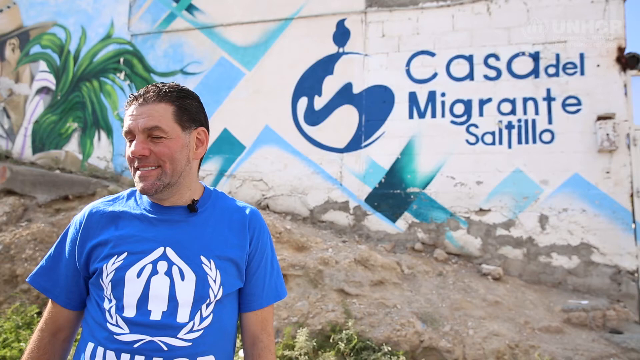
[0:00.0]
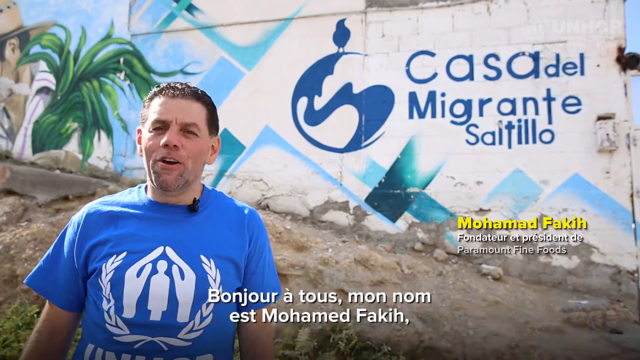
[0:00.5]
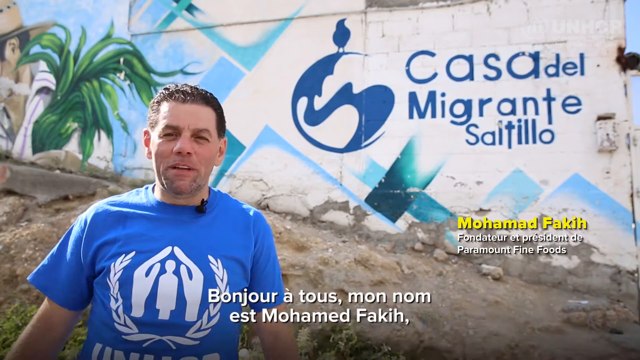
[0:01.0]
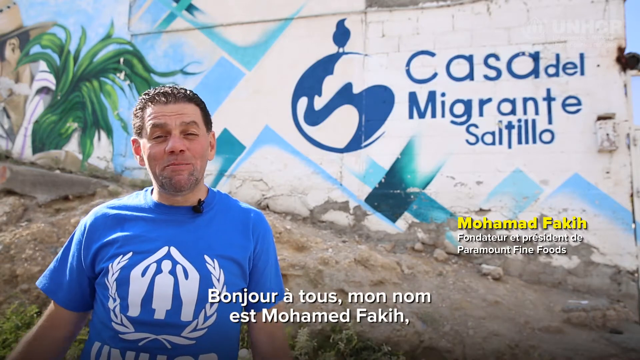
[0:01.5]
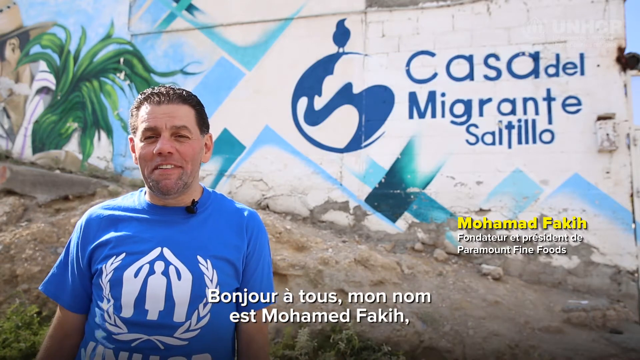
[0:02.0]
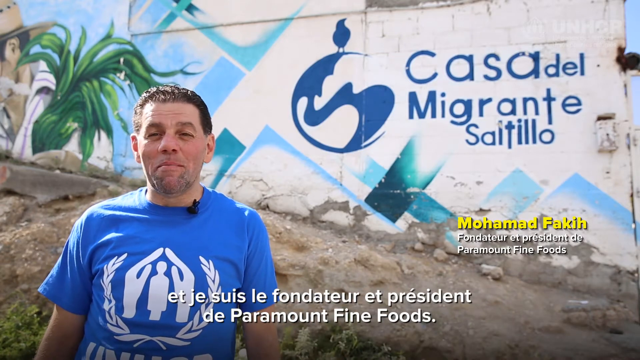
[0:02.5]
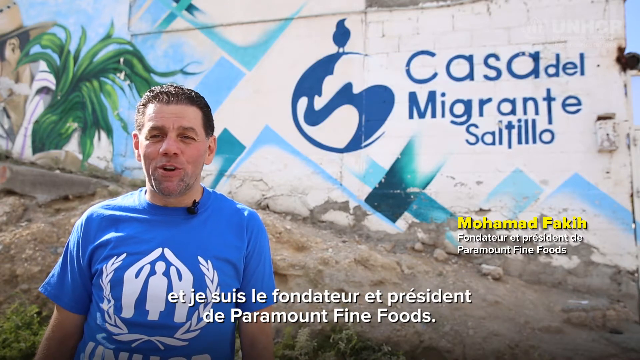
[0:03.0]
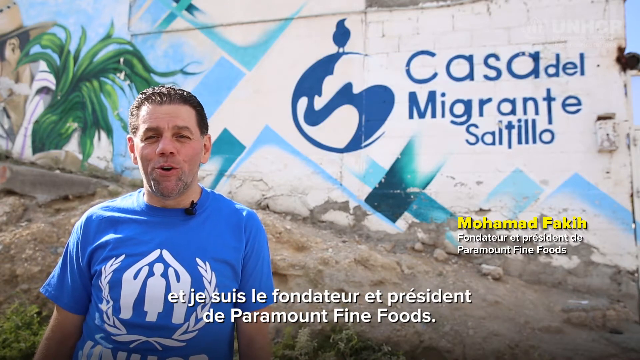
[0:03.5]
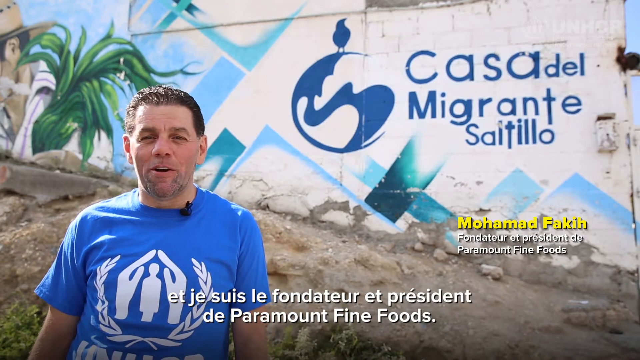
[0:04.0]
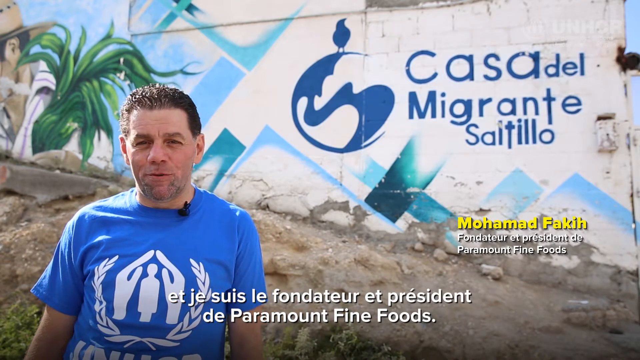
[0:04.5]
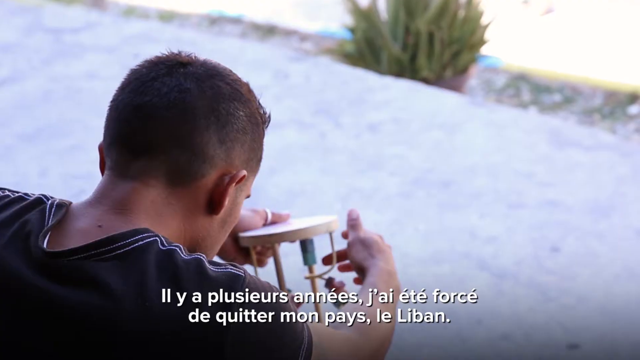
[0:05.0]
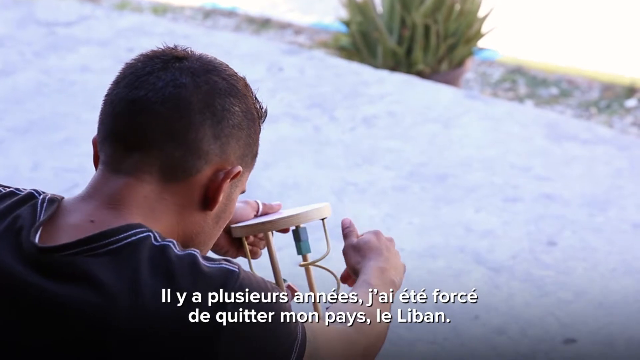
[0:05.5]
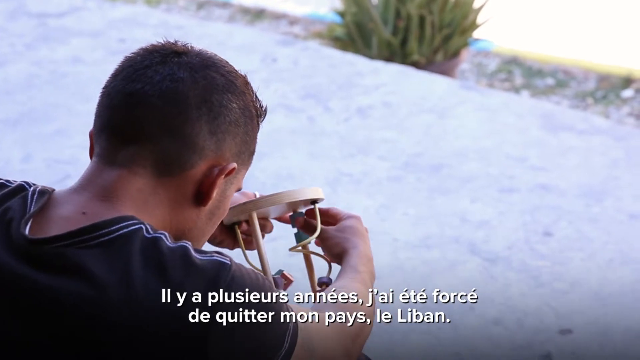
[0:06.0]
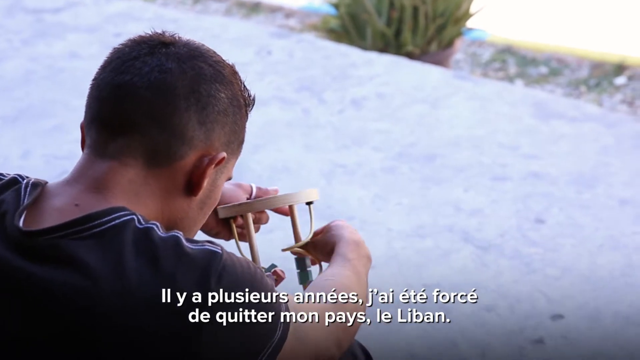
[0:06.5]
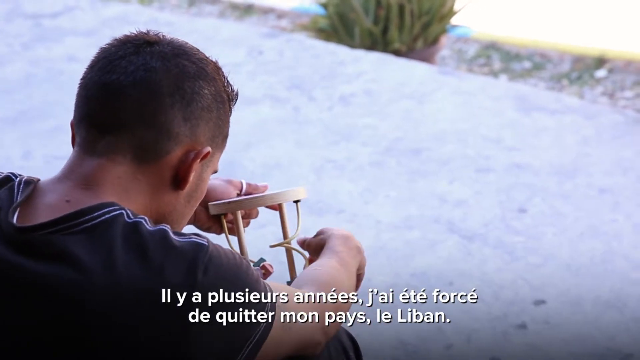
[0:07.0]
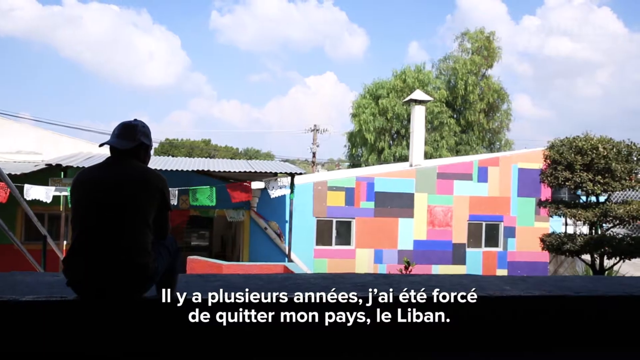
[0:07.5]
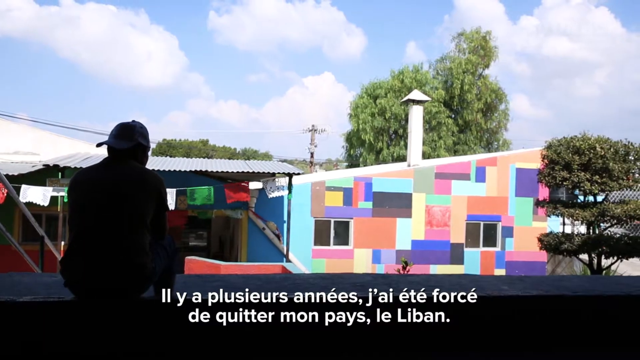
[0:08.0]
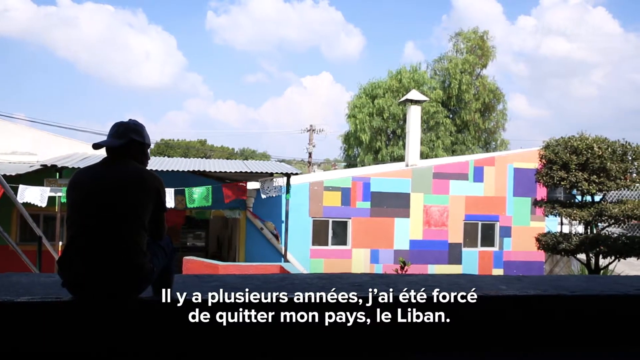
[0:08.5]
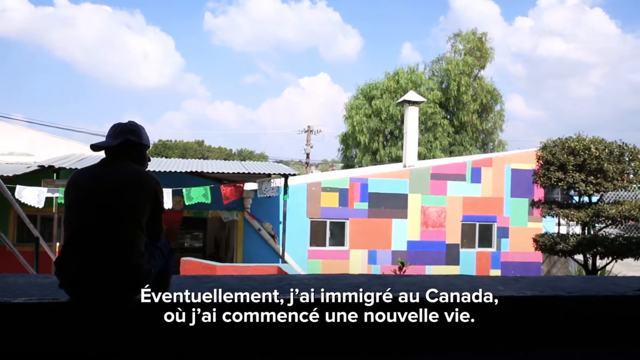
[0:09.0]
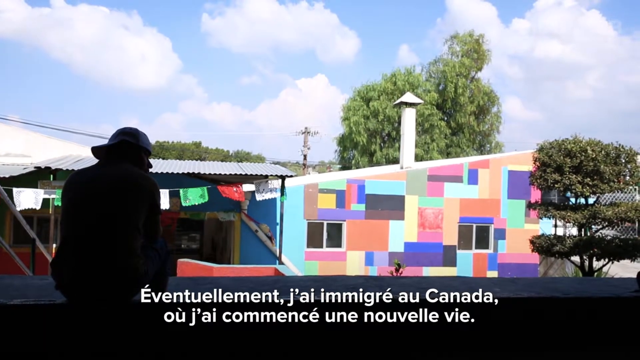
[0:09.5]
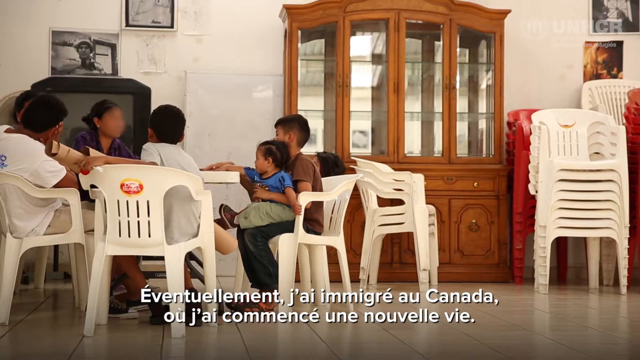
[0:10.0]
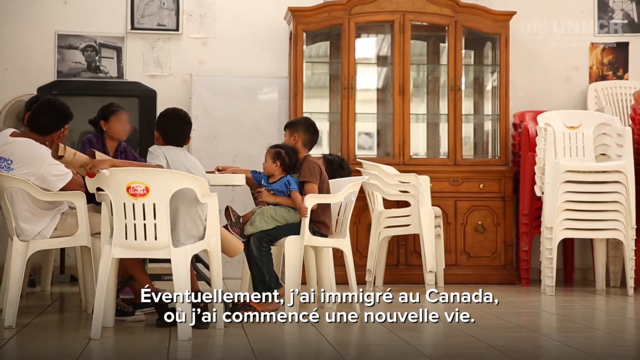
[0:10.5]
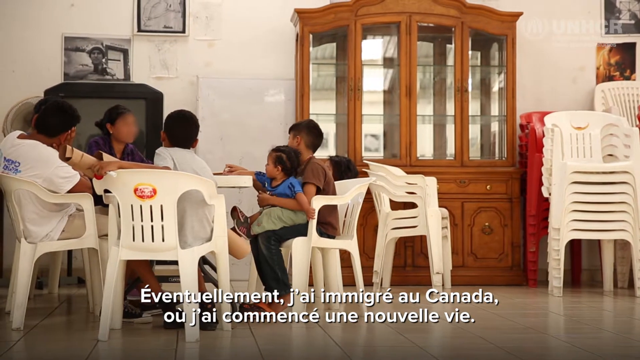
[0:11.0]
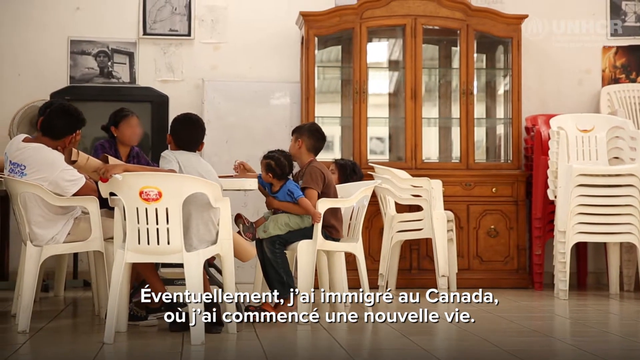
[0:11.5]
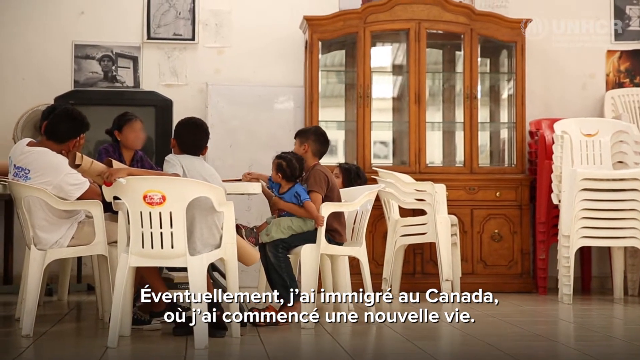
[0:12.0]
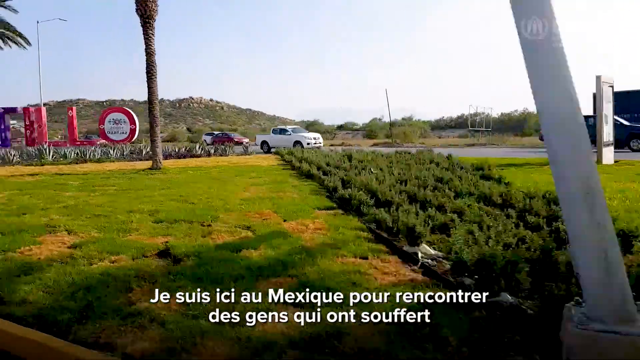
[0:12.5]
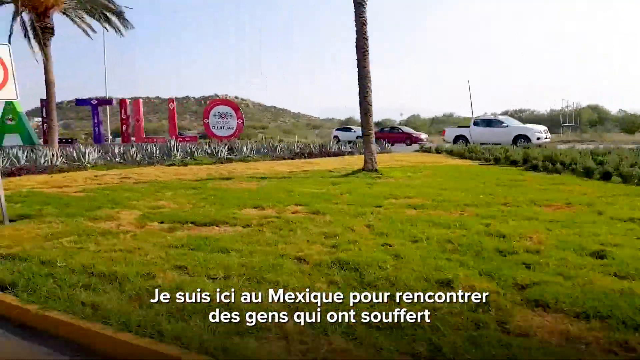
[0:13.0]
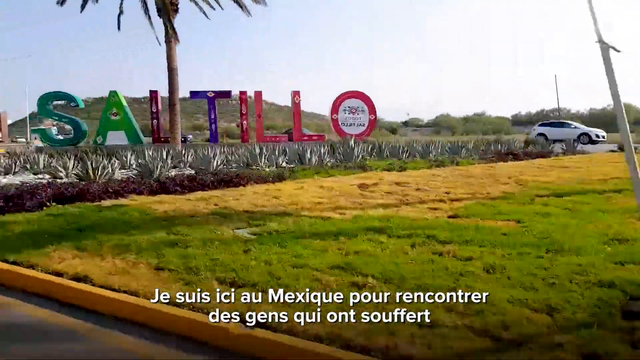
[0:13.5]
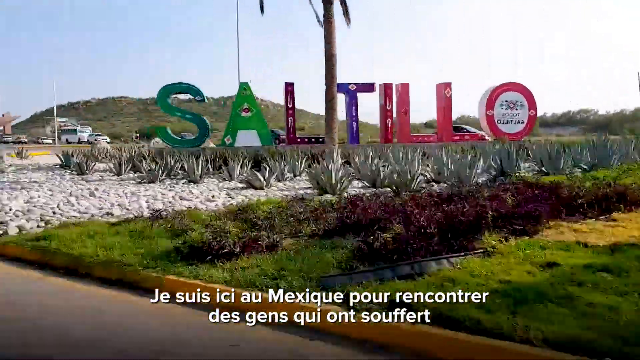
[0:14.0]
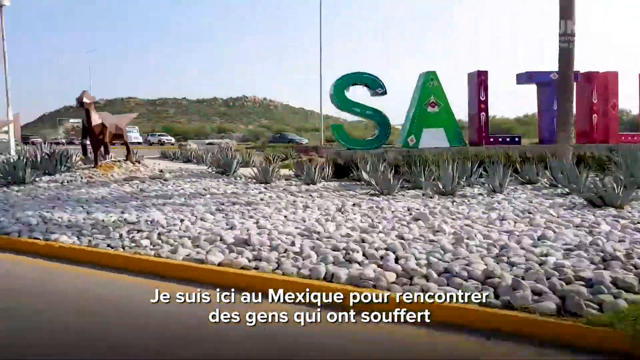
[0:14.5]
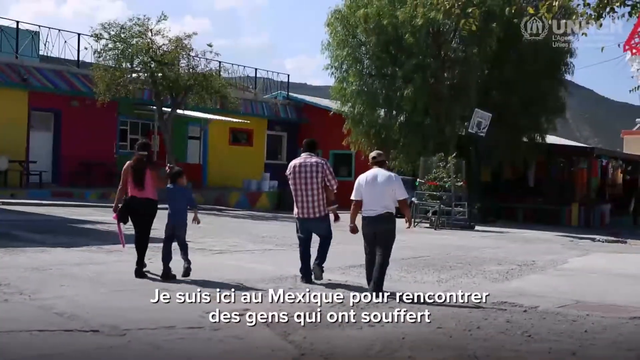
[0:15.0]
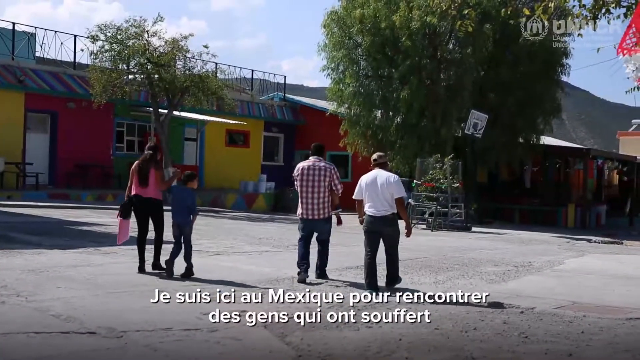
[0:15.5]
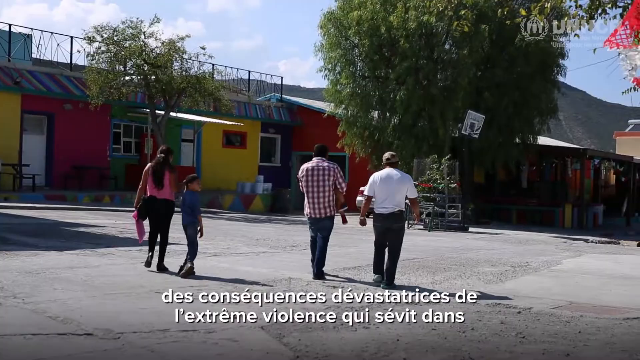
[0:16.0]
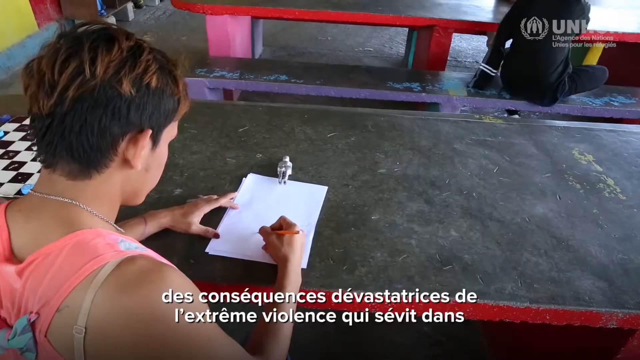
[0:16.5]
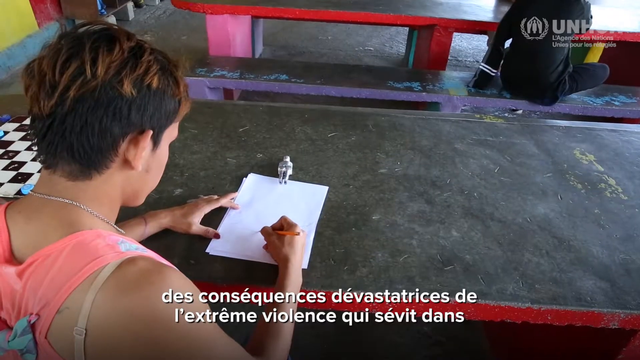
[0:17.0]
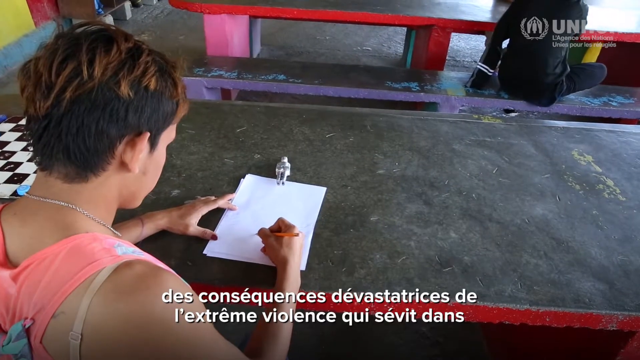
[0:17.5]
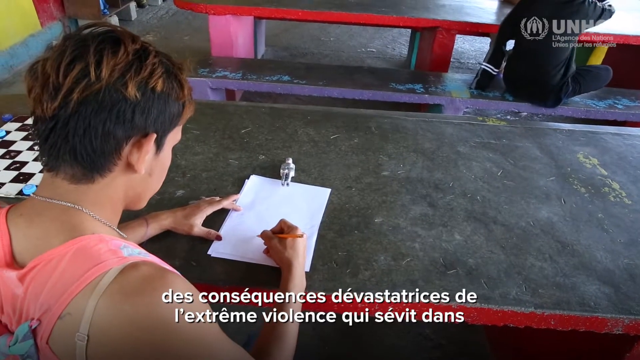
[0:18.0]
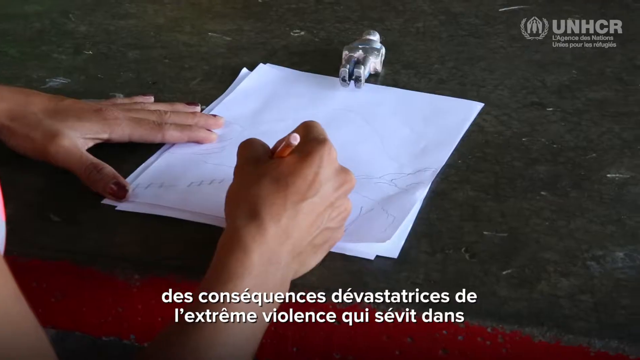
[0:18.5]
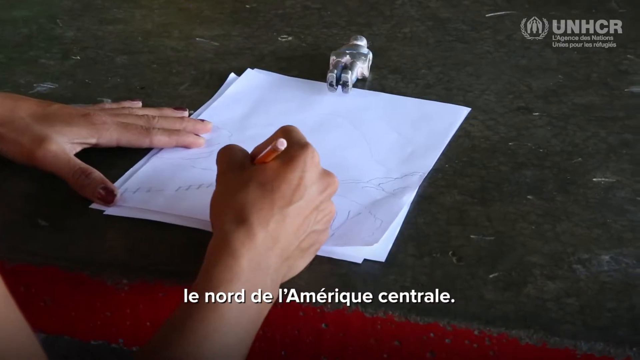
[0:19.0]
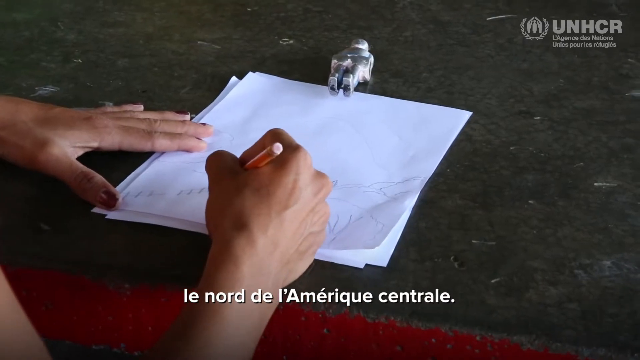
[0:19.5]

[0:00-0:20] A man with a white skin tone appears on the bottom left, wearing a blue shirt with a white logo on it. White subtitles, apparently in a foreign language, appear at the very bottom as he speaks. Behind him is some type of large wall that looks like a mural of some sort, with the words "Casa del Migrante Saitio" written on it. The video switches to a scene of a man with his back toward the camera, holding some type of wooden object; he plays with it a little as balls fall, and it is kind of like a kid's toy. The scene changes to a man on the left kneeling down and looking into the distance. It looks like a very windy and very sunny day outside. In the background is a very colorful house, primarily blue, with a bunch of multi-colored rectangles and square shapes painted on its side, and behind the house are green trees. The scene then switches to a family inside a kitchen or dining area, sitting at a white table on plastic chairs; there are probably about seven family members at the table.